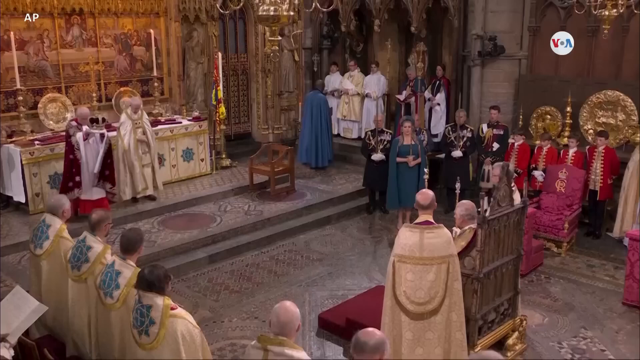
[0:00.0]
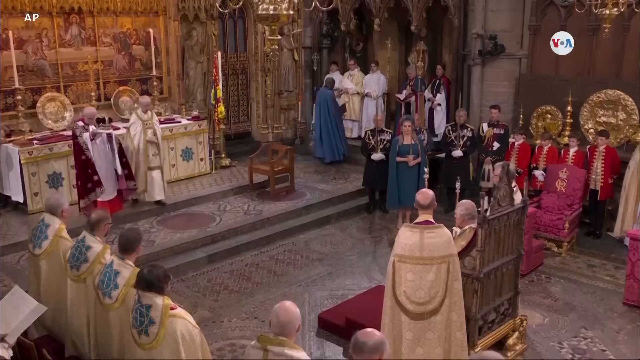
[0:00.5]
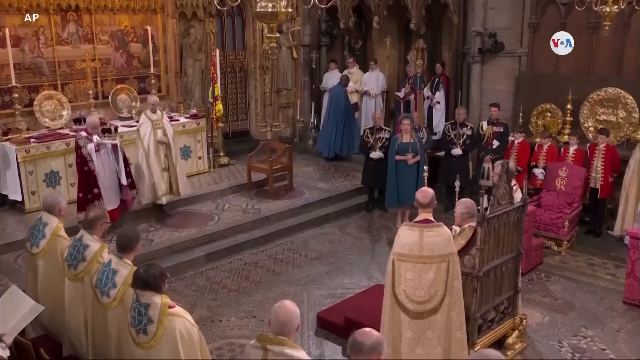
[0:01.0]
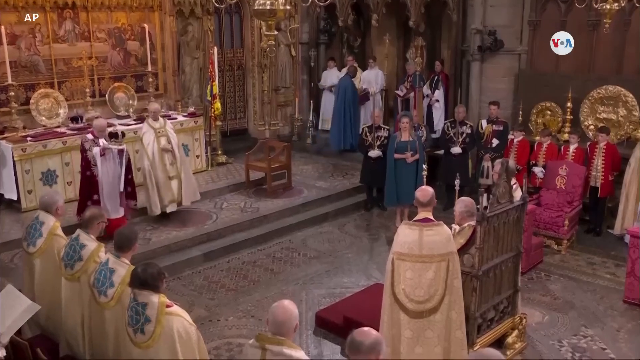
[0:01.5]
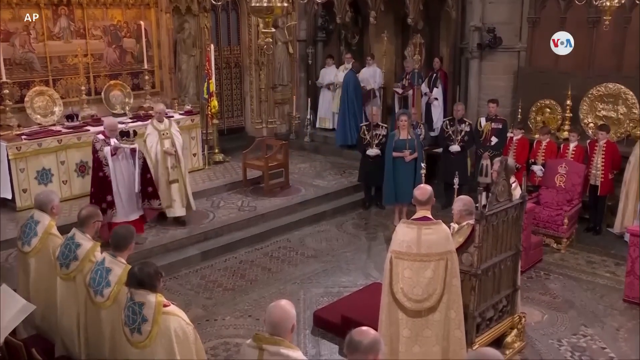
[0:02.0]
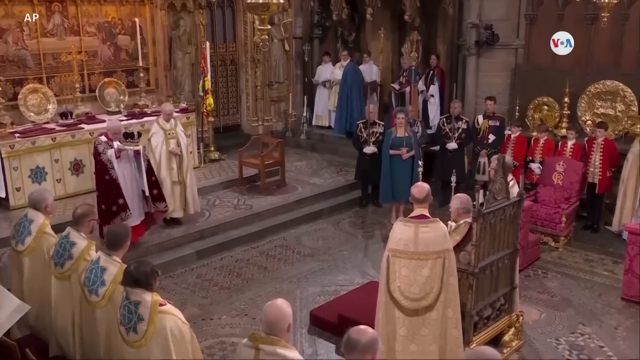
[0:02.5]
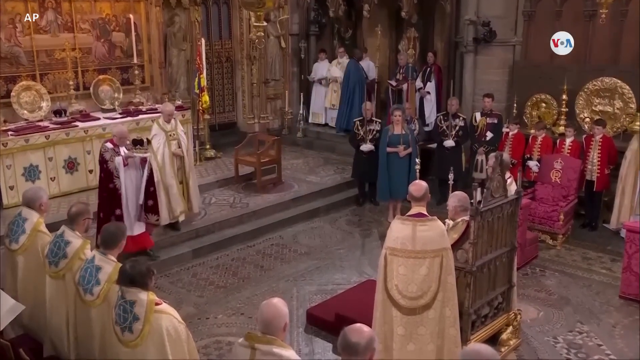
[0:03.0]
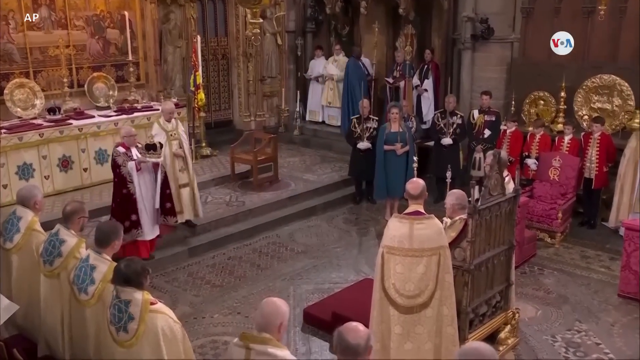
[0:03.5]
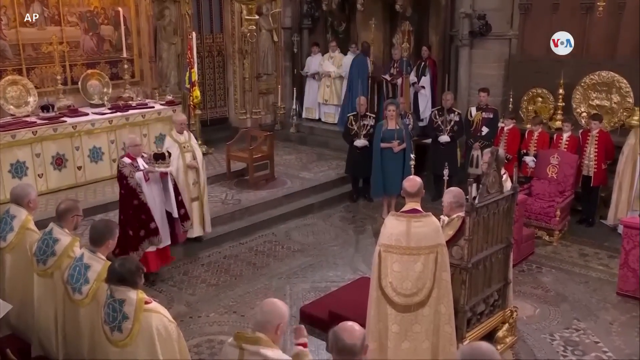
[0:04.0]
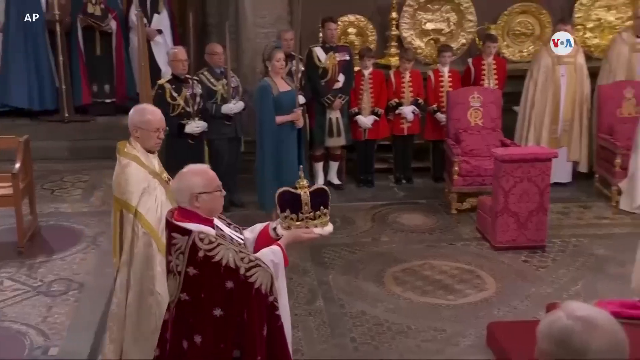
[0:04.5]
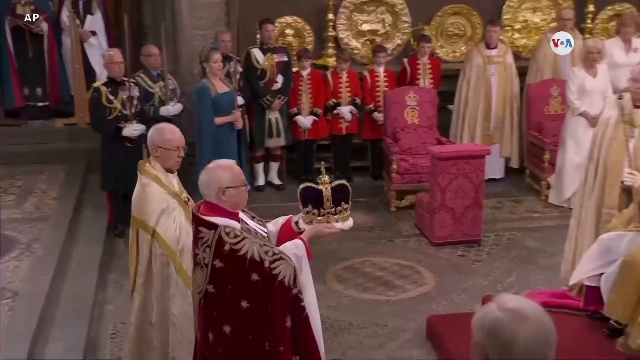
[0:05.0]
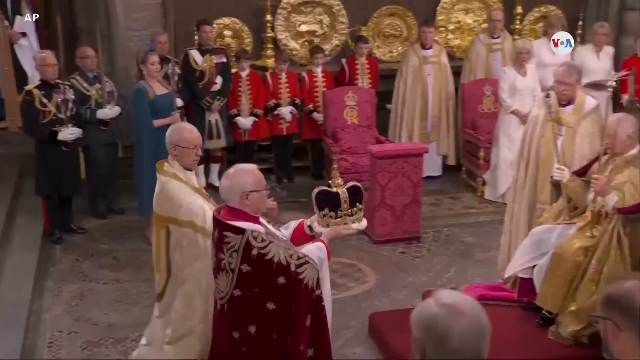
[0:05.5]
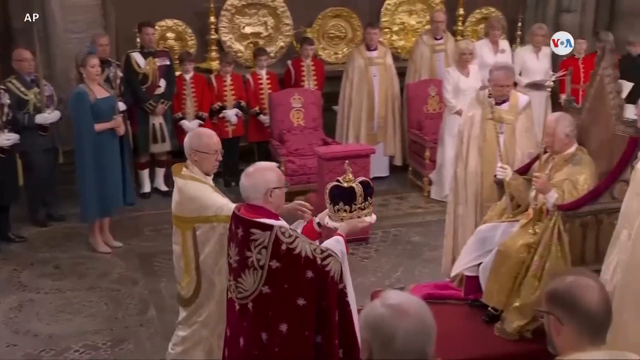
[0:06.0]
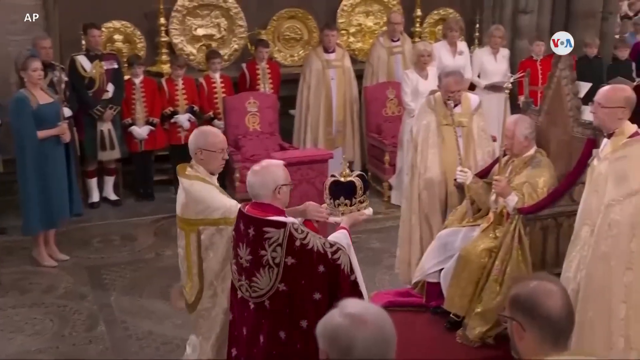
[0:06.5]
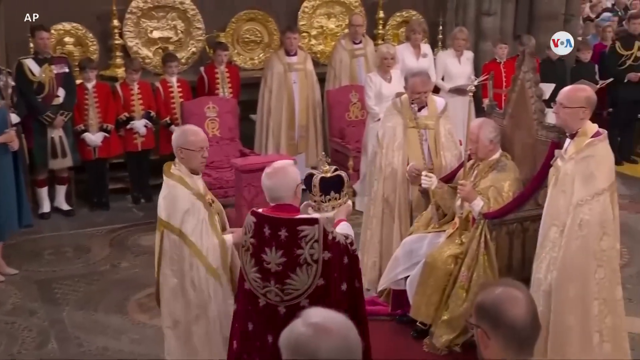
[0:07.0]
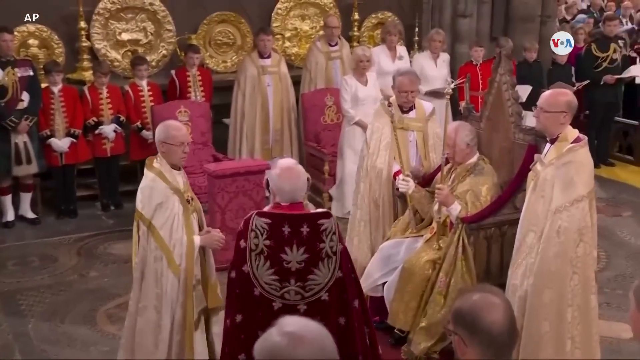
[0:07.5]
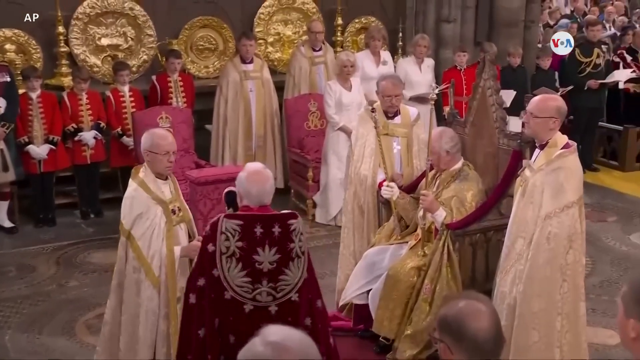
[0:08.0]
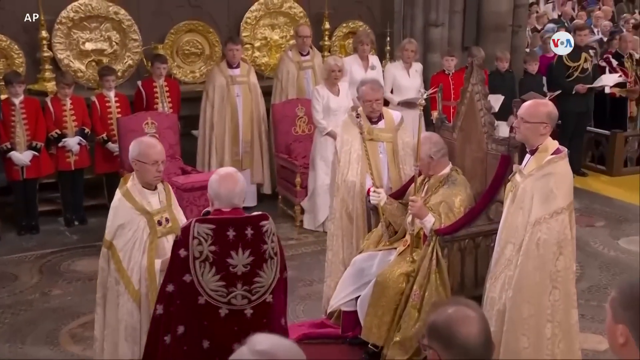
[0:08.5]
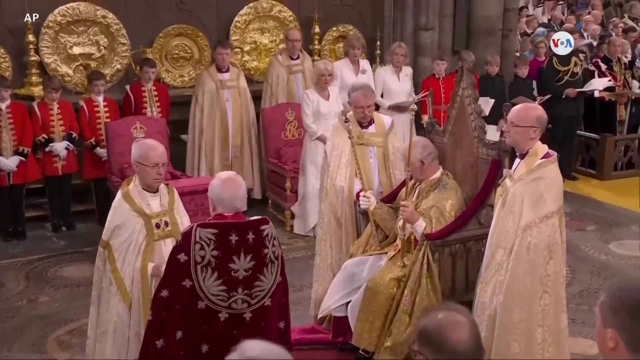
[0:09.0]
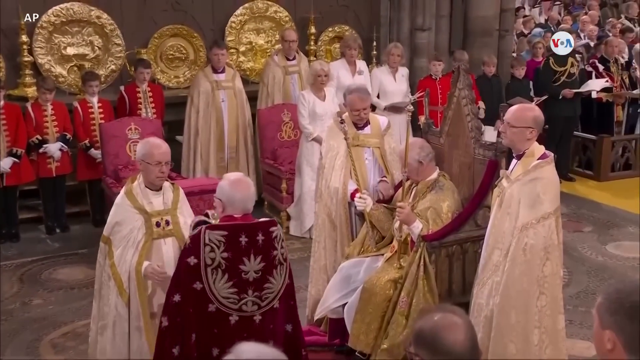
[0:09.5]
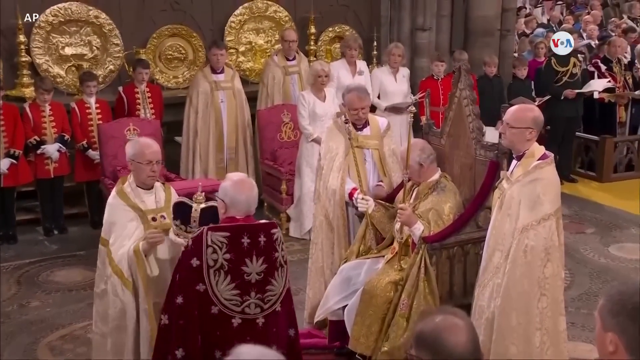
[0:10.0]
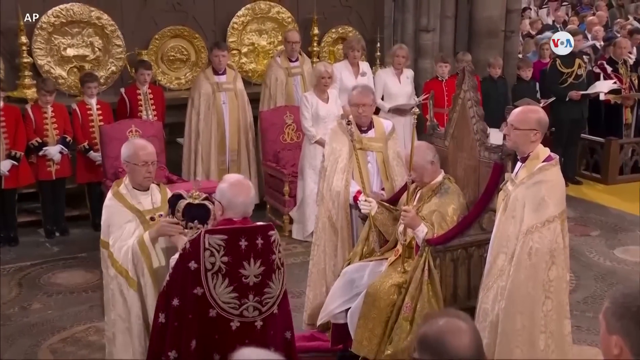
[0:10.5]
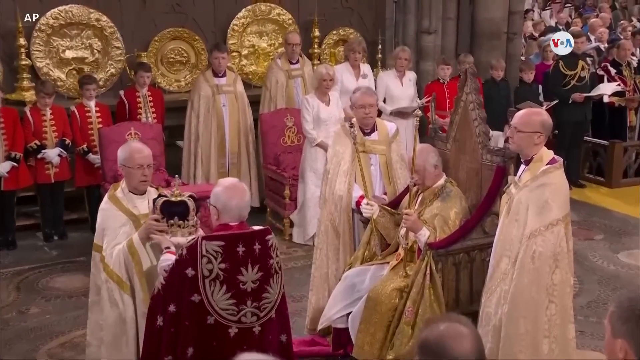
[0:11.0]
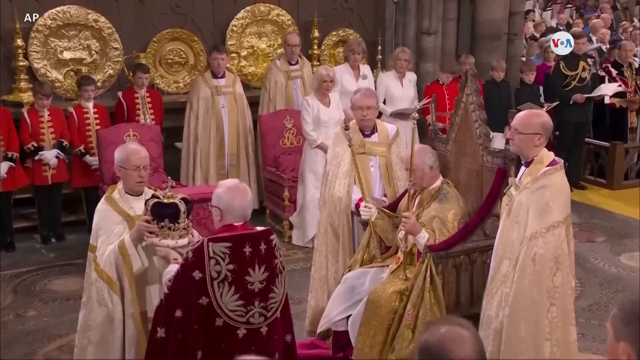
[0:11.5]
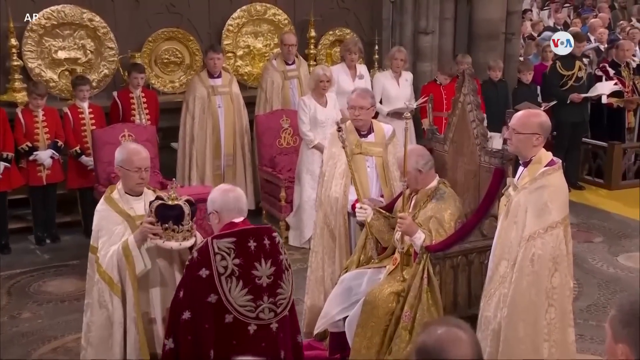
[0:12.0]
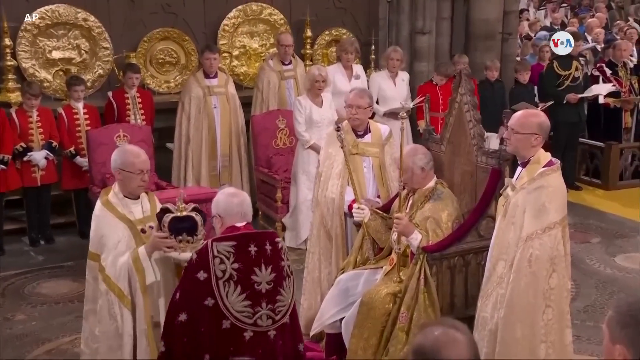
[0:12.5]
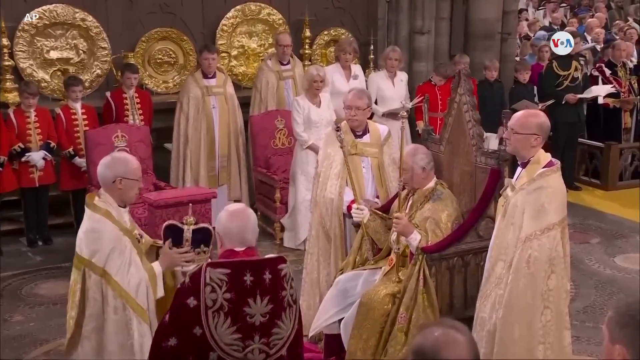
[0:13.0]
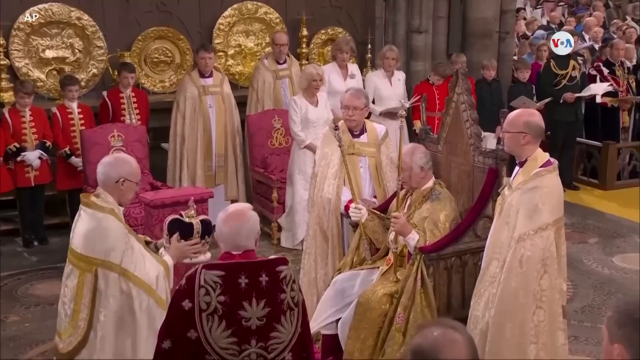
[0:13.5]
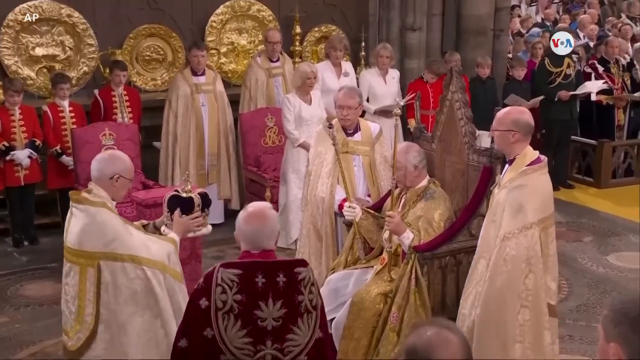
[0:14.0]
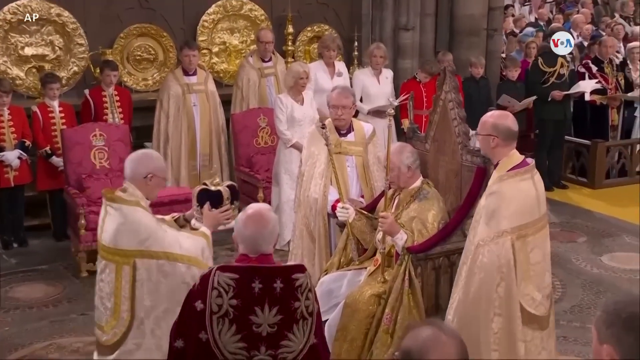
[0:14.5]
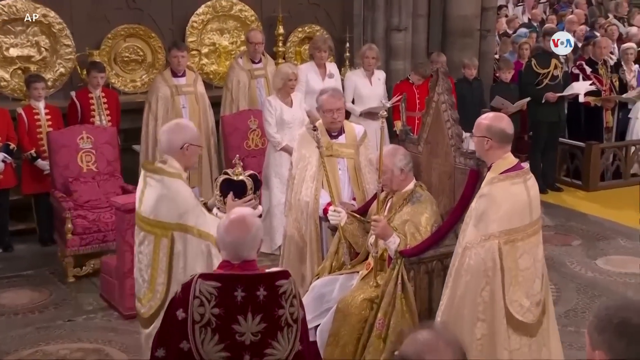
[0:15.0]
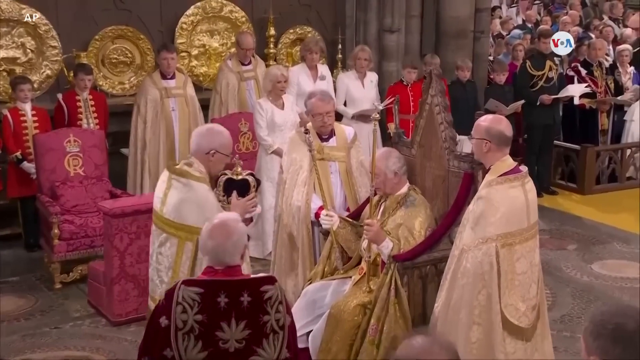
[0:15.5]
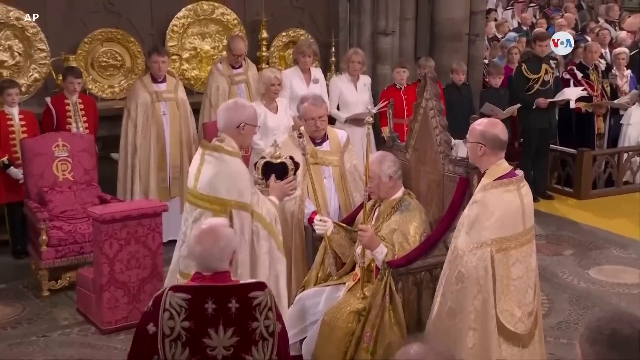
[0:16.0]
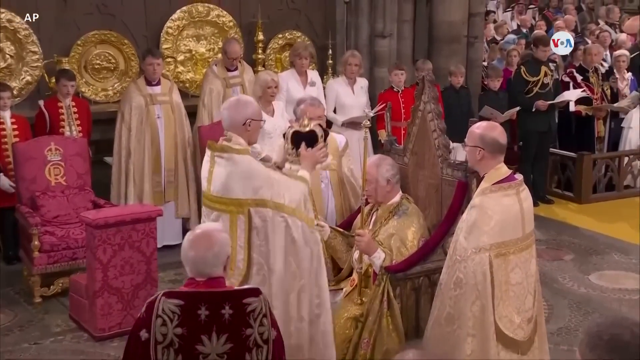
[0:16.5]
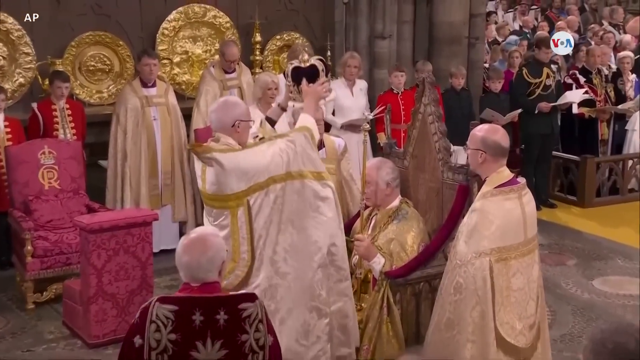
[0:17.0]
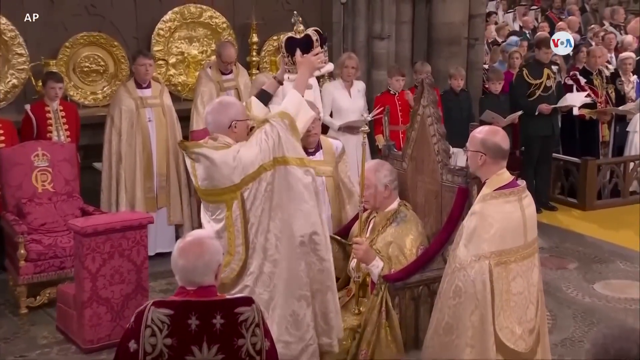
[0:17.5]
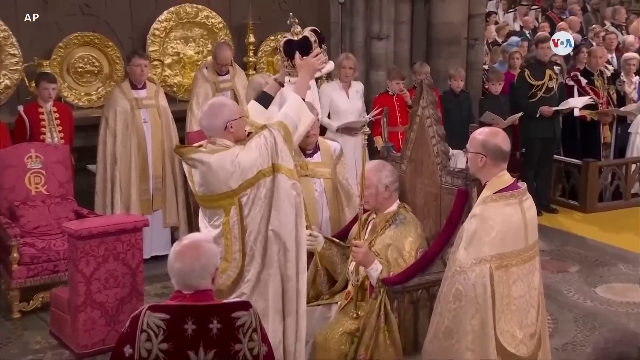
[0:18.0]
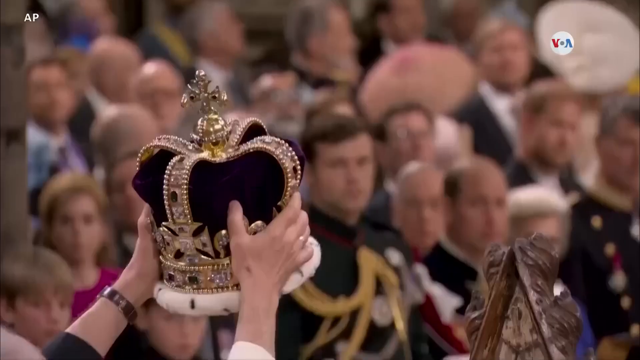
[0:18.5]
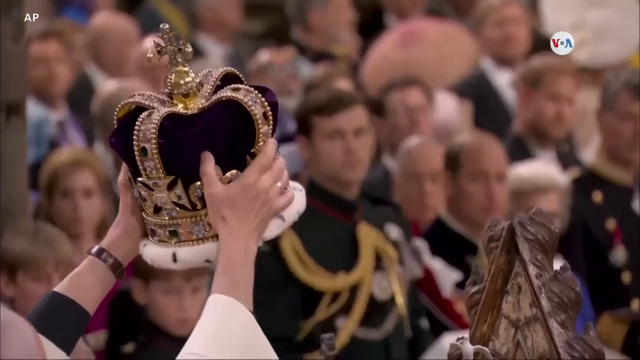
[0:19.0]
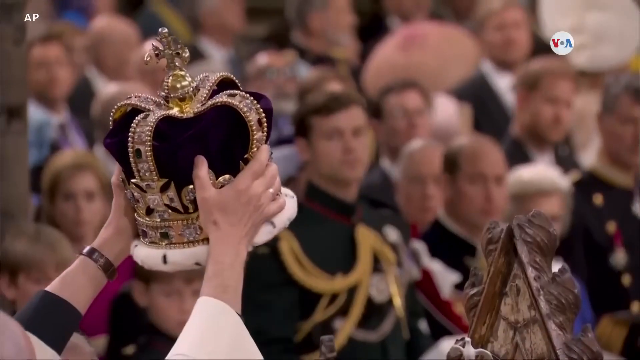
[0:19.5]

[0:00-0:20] The video shows the coronation of King Charles of England inside Westminster Abbey, a grand interior of a grand building. King Charles sits on a throne of gold, though it looks rather bronze in colour. Surrounding him are a number of people dressed in red, blue and black, and many of the uniforms look like they are from a different period. The video cuts to a view of the King from the side, in front of him rather than straight on. He holds a gold rod in each hand. Two men walk towards him: one wears a red cloak with what look like star designs on it, and the other, apparently the Archbishop of Canterbury, wears a white robe with some sort of gold and red lining. They hold what looks like a crown, purple with gold going over the purple and something on top. The slightly balding man in the red cloak hands the crown to the apparent Archbishop of Canterbury, who walks up to the King, kisses the crown and holds it aloft; it looks purplish red with gold around it. The camera moves in for a close-up, showing the crown better: it is purple with a white trim, with gold going over it from all sides that also looks decorated with some sort of jewellery. On top of the crown is a cross, also sparkly gold and jewelled.